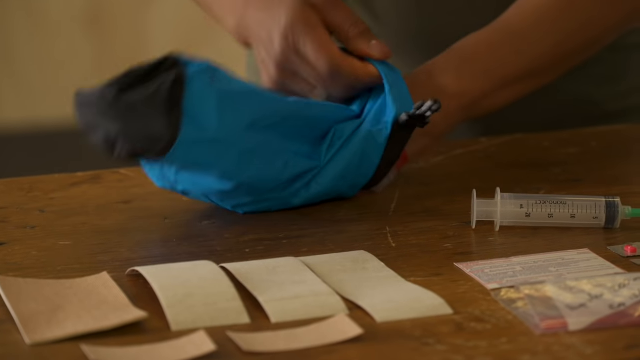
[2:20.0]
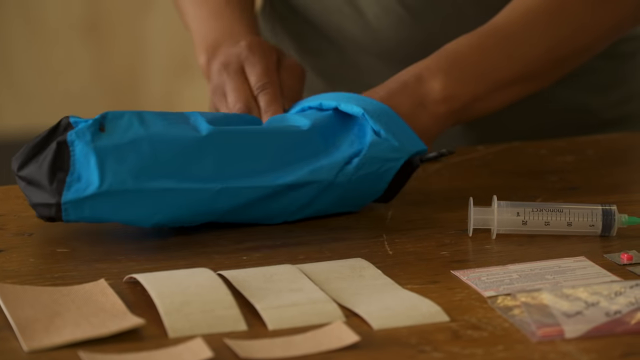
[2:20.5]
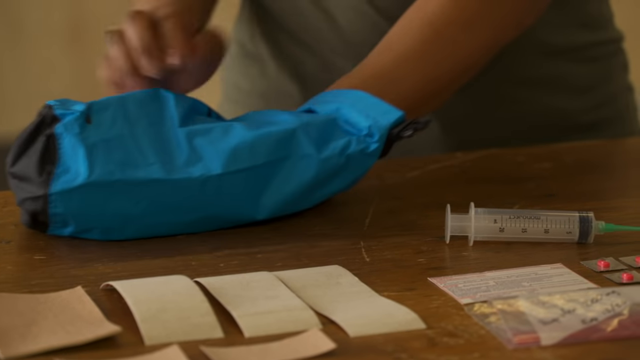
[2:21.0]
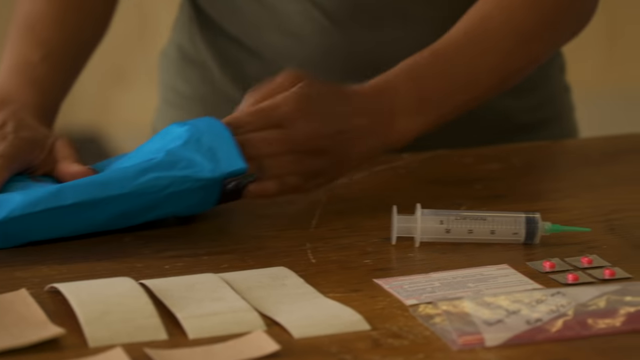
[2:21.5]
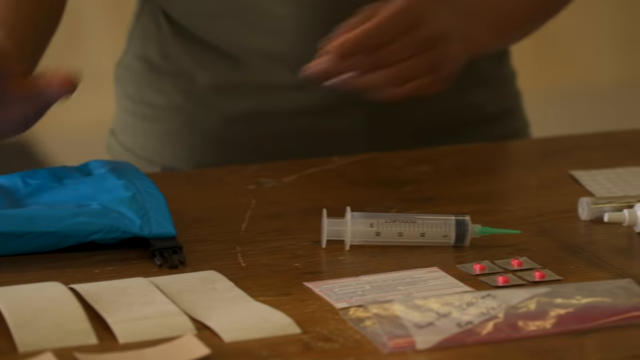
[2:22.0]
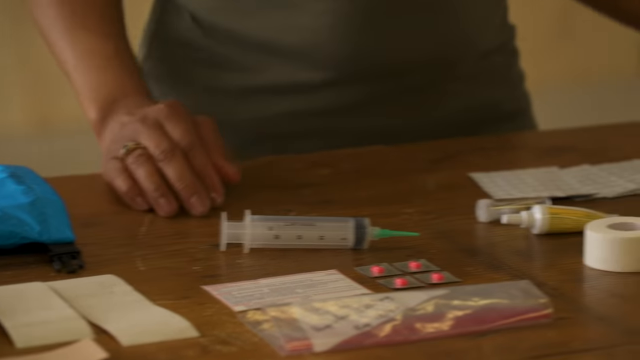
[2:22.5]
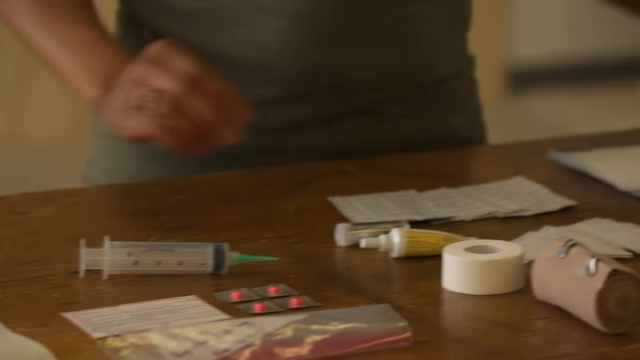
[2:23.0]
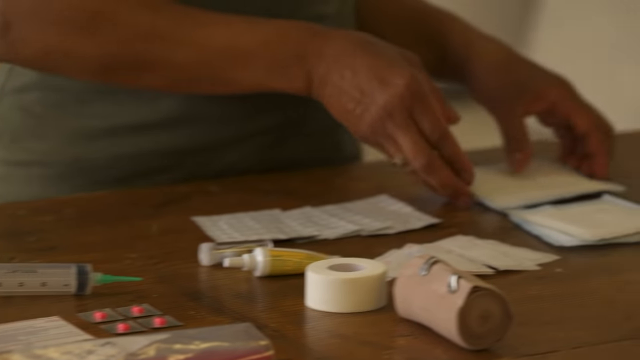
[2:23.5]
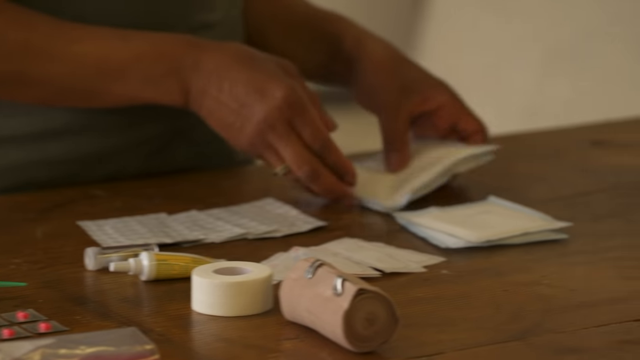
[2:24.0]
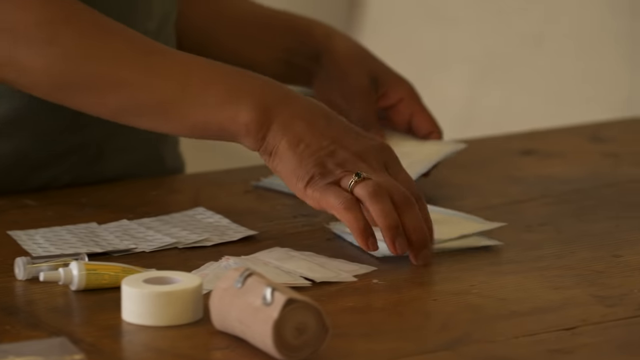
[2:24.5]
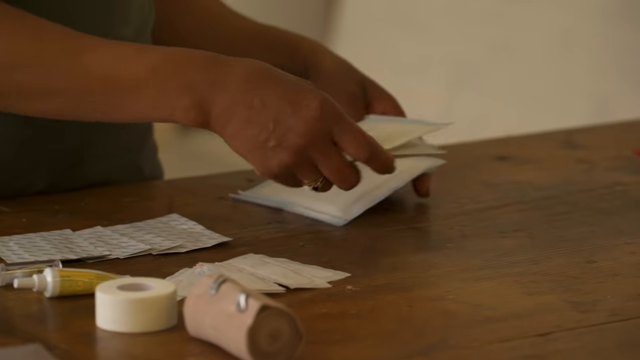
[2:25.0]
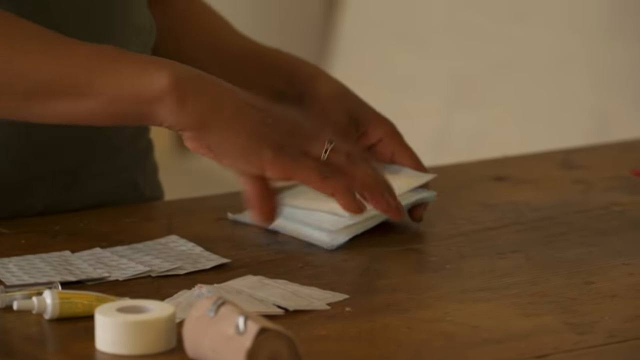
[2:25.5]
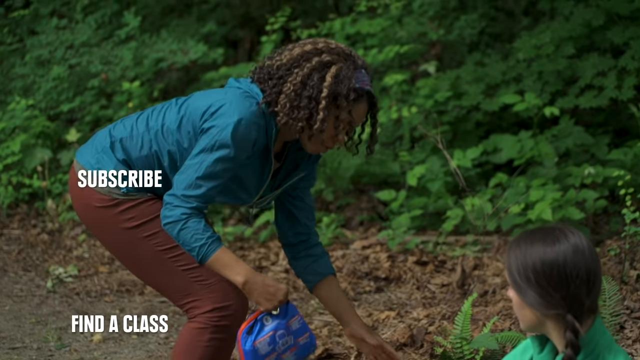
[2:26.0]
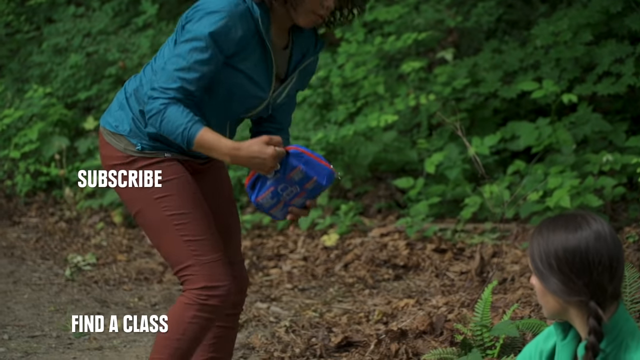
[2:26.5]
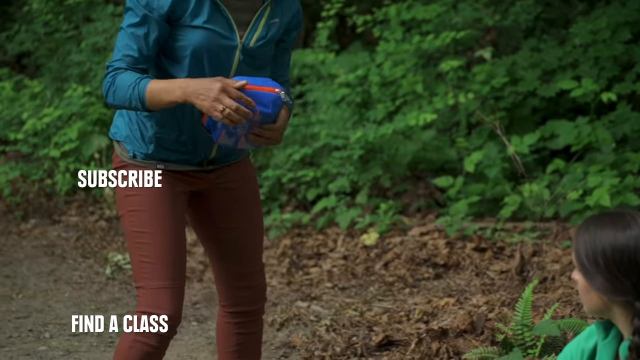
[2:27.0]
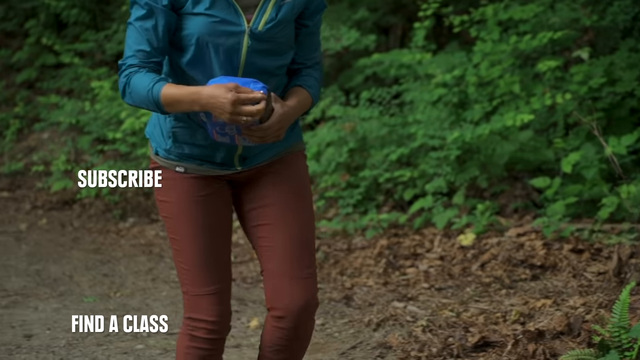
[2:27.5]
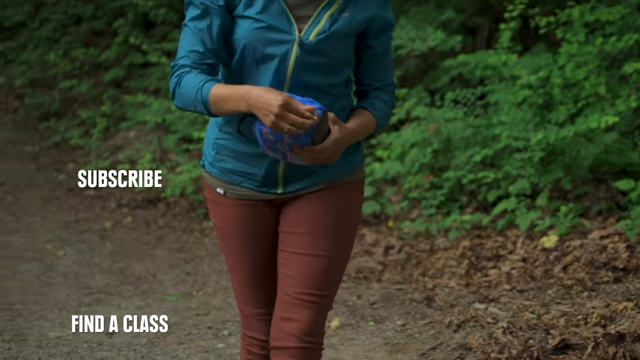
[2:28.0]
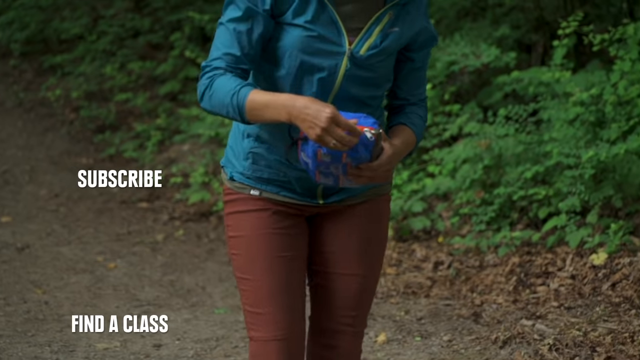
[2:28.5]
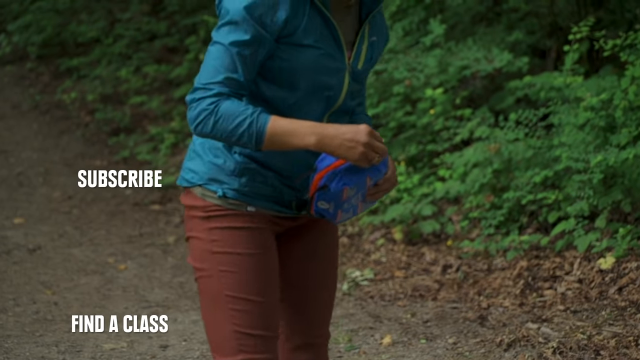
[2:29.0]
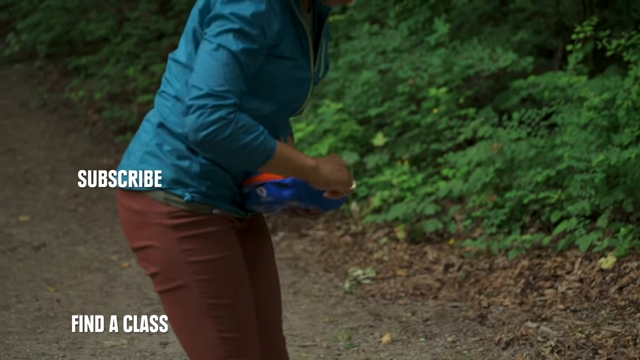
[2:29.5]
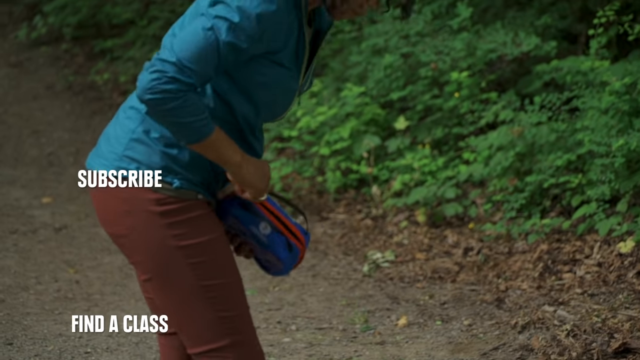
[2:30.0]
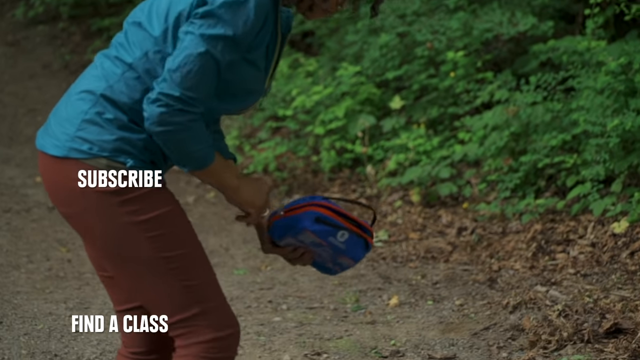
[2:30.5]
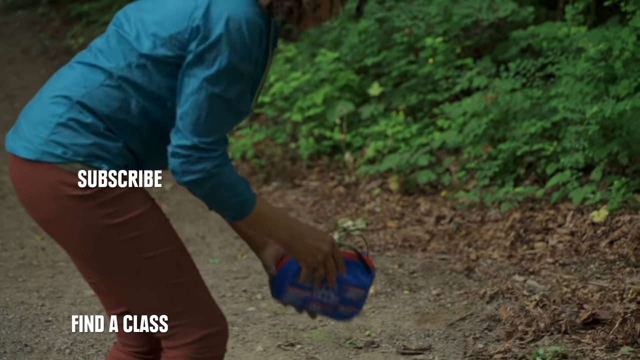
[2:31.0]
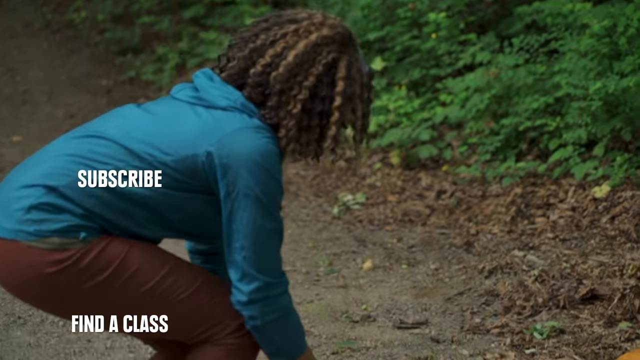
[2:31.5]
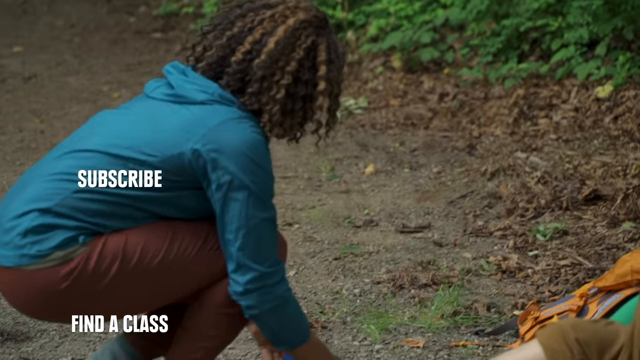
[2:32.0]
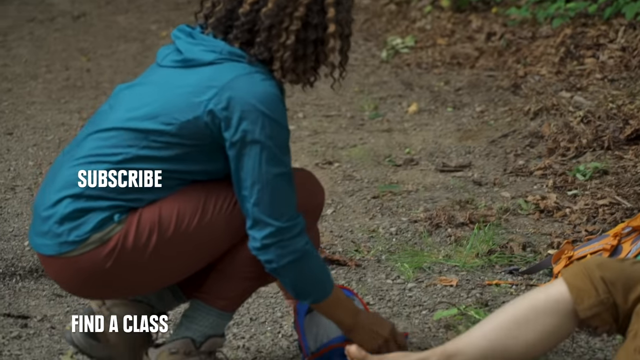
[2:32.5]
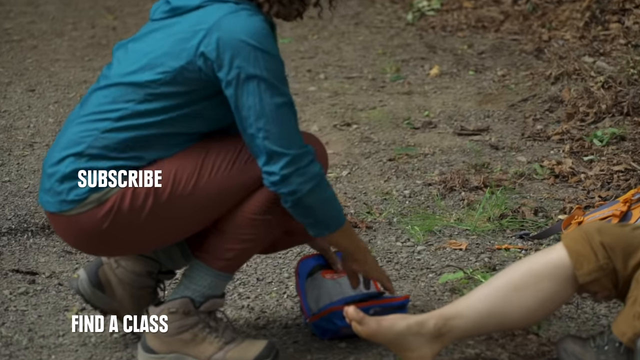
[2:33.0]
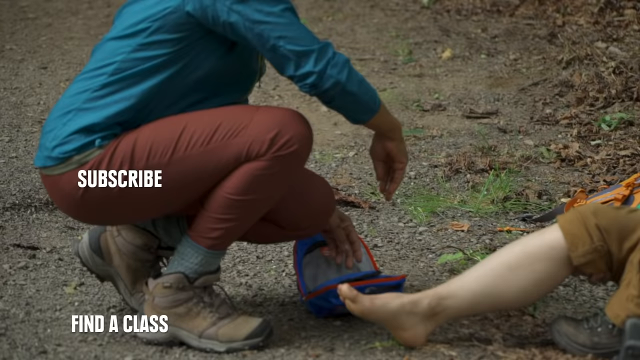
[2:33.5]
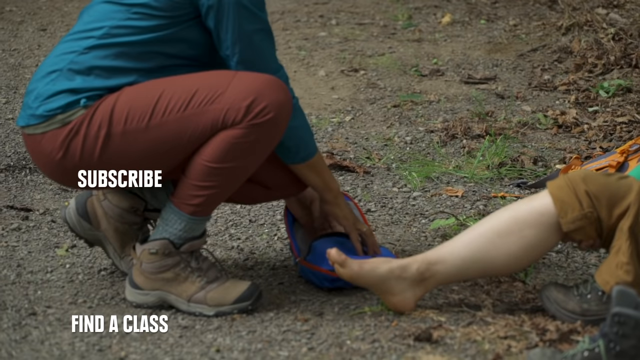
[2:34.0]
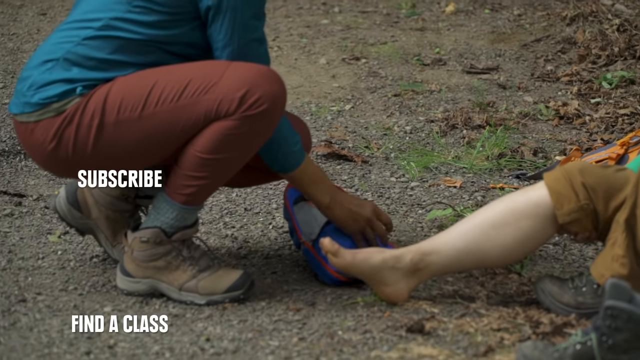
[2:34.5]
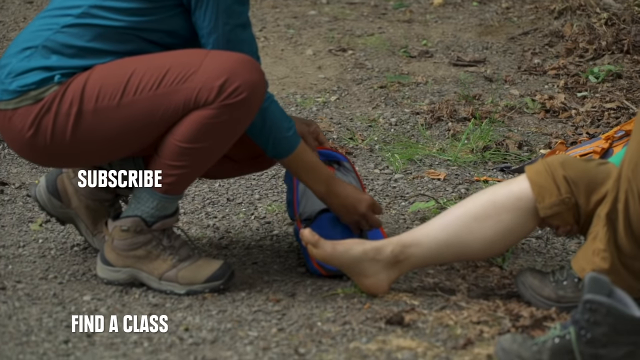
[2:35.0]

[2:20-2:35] A brown wooden tabletop has various pieces of first aid equipment laid out across it. There are five brand-new blister pads of various cuts and sizes and an irrigating syringe sitting on the table. Below the syringe are several sealed tablets of ibuprofen and an ibuprofen label from the back of the box, and under this is a folded-up baggie filled with loose pills, with the words "200mg ibuprofen. Expires December 2020." written on it. To the right of these items are a white cylindrical roll of medical tape, a small container of Neosporin, a clear plastic cylindrical container holding a small pair of steel tweezers, a pile of hydrogel pads, a roll of elastic wrap, and a stack of sealed medical gauze in various sizes.